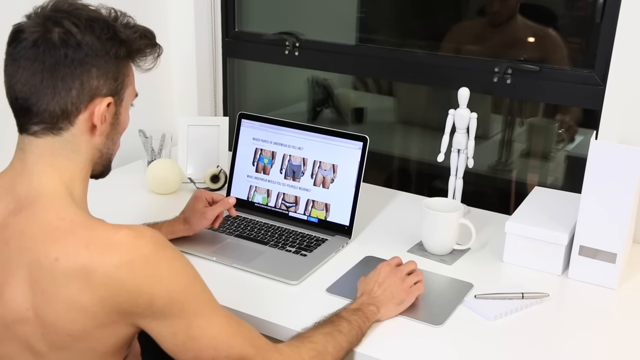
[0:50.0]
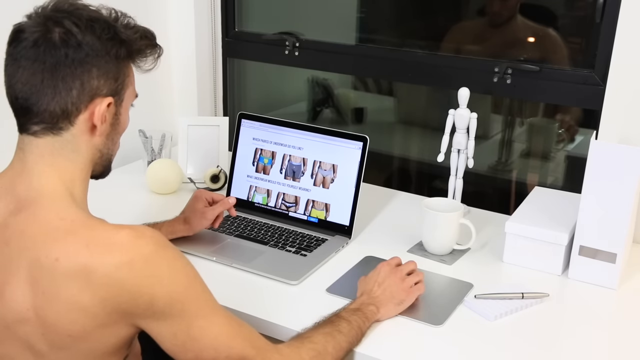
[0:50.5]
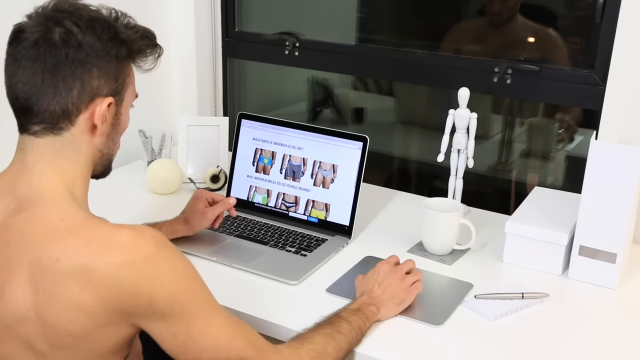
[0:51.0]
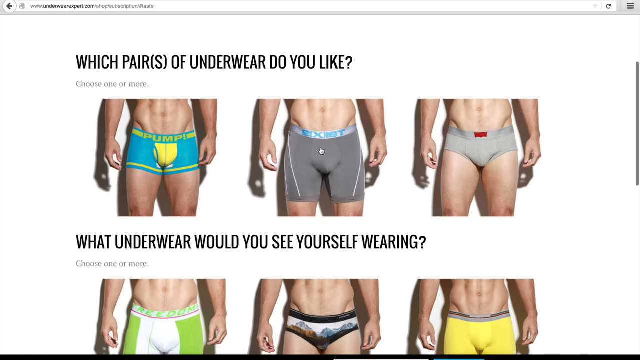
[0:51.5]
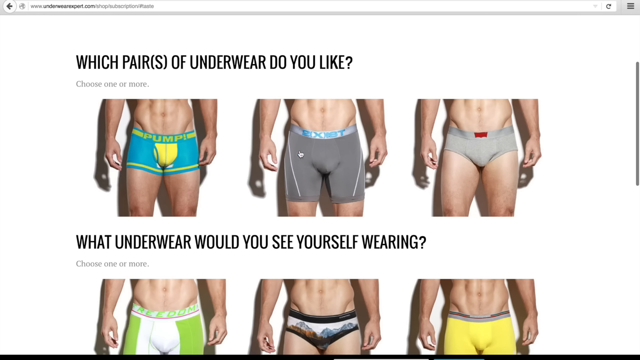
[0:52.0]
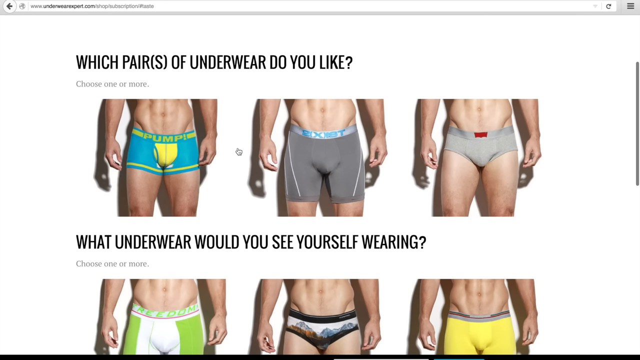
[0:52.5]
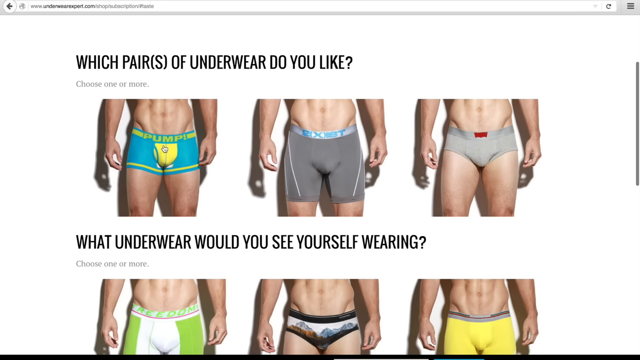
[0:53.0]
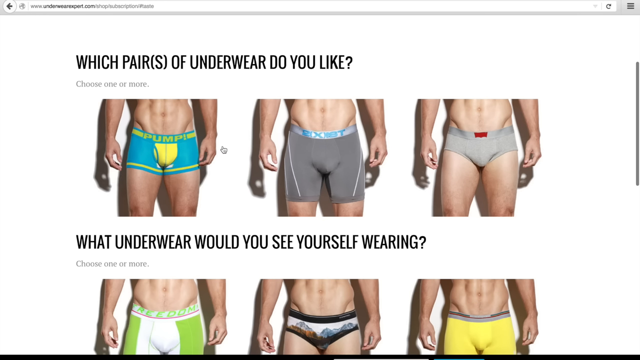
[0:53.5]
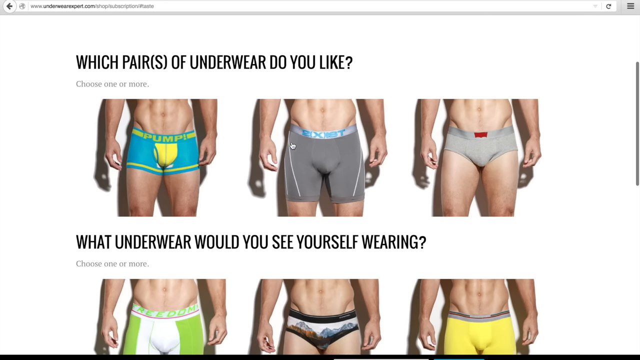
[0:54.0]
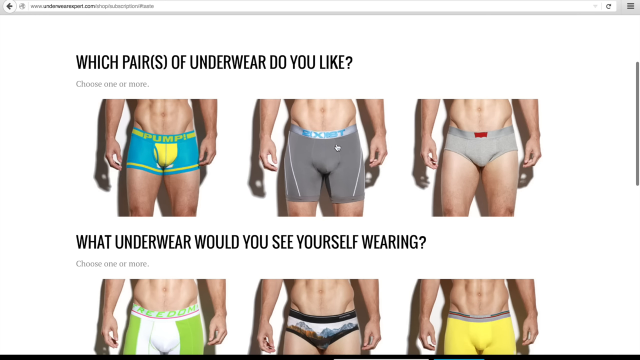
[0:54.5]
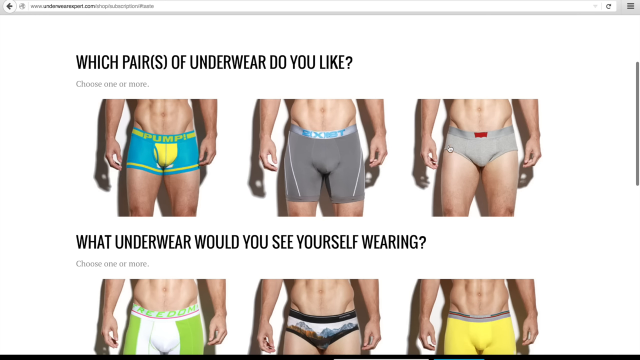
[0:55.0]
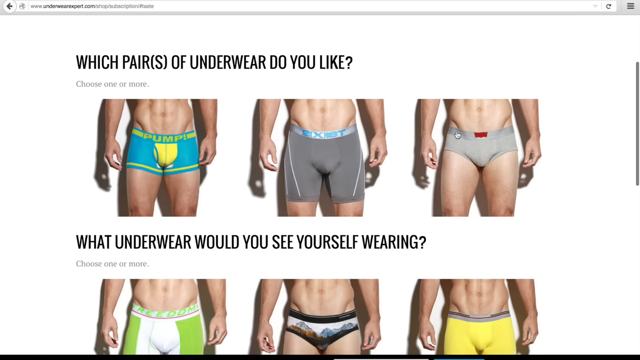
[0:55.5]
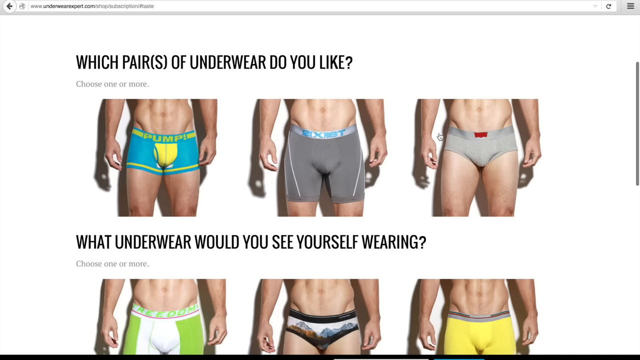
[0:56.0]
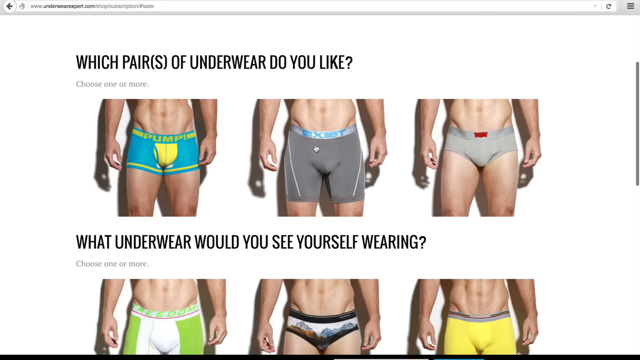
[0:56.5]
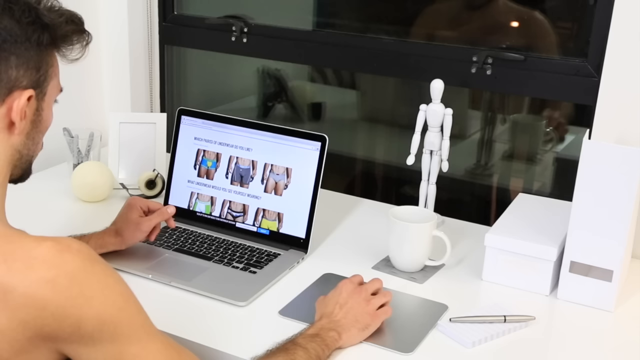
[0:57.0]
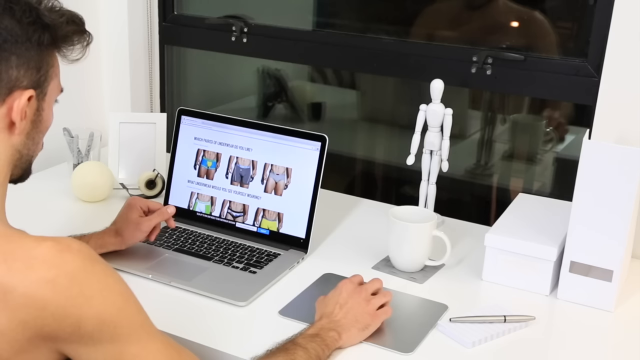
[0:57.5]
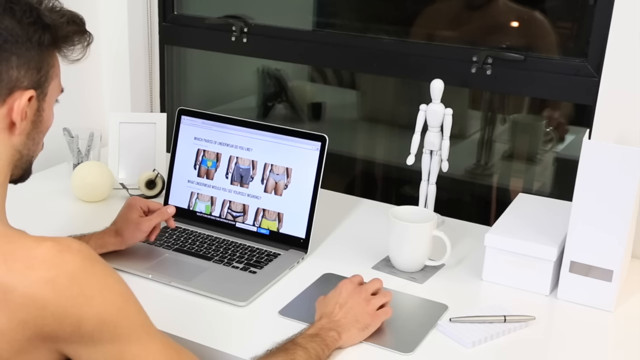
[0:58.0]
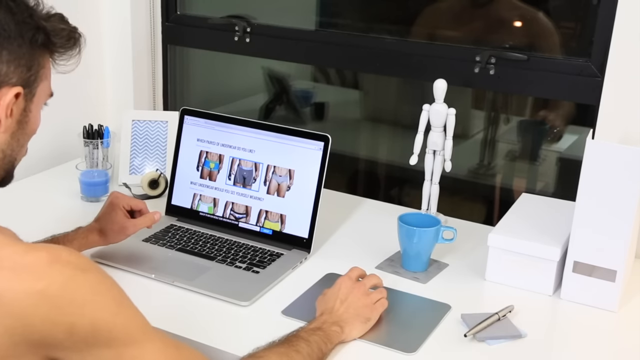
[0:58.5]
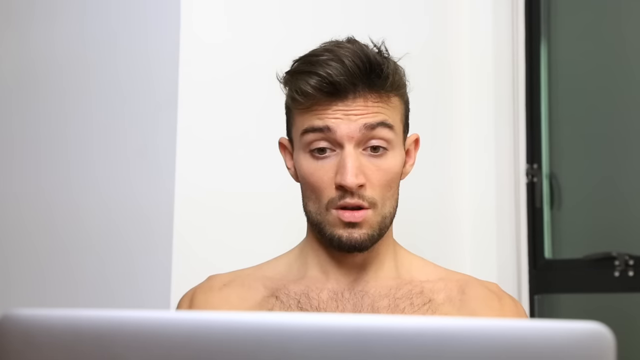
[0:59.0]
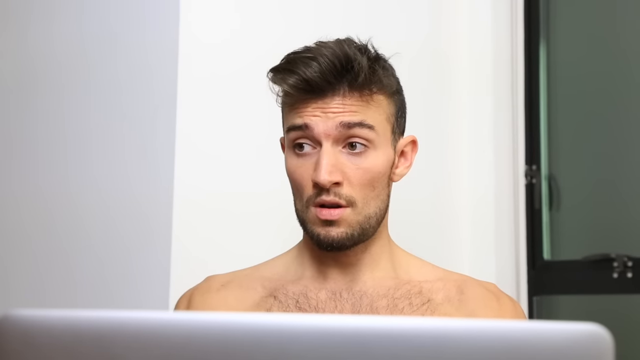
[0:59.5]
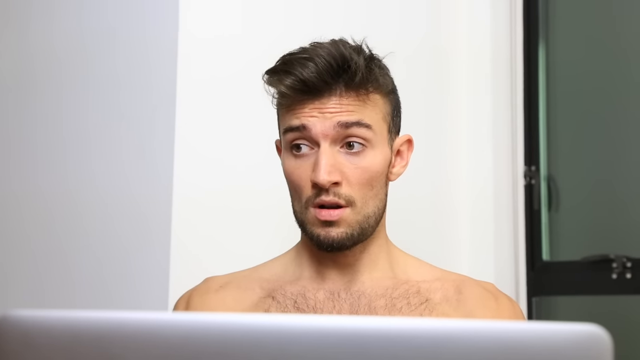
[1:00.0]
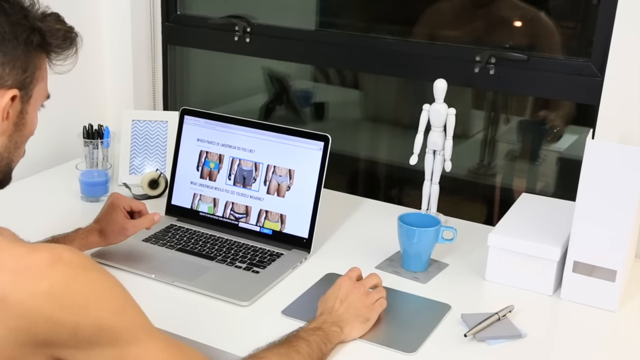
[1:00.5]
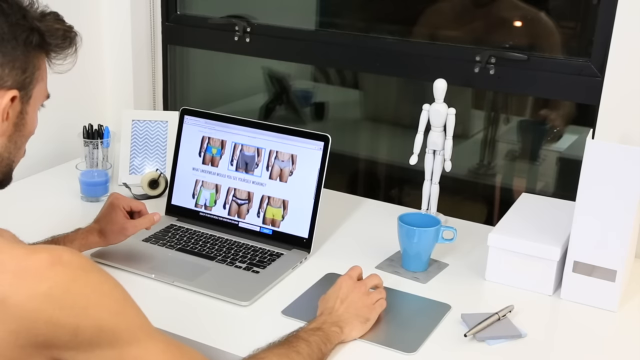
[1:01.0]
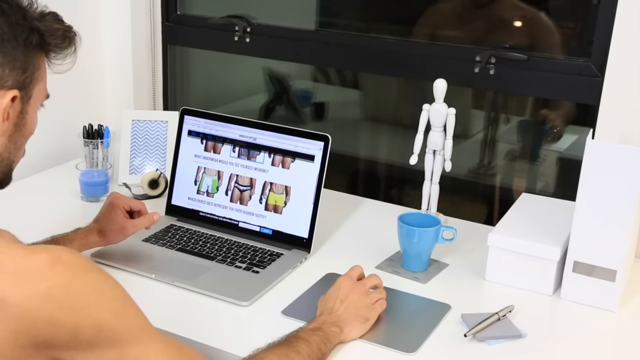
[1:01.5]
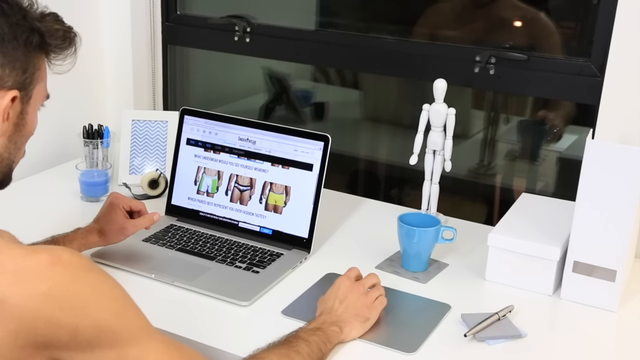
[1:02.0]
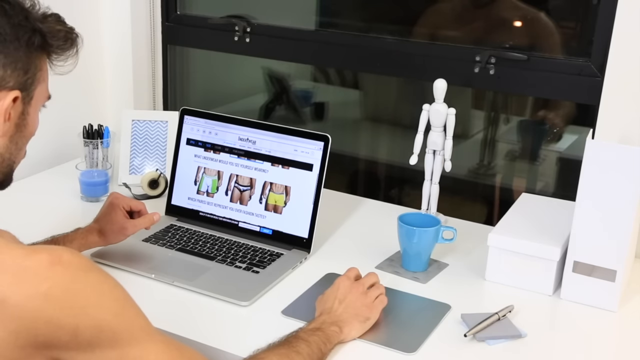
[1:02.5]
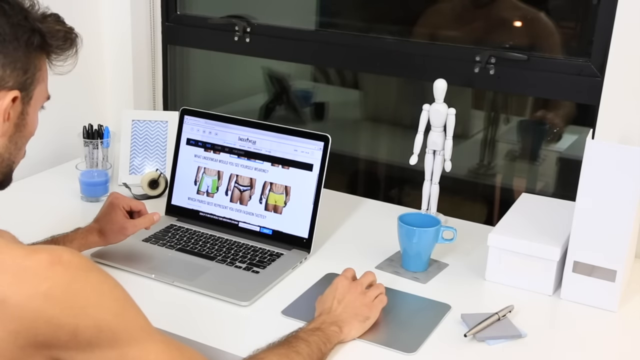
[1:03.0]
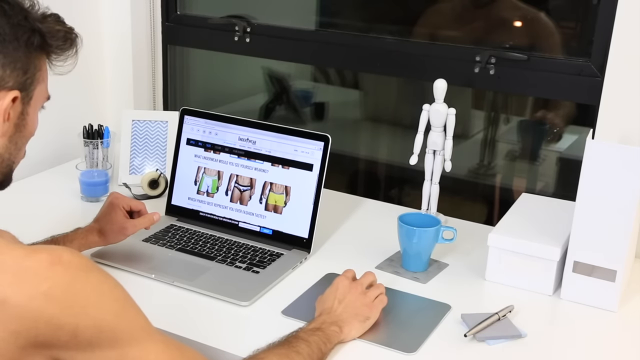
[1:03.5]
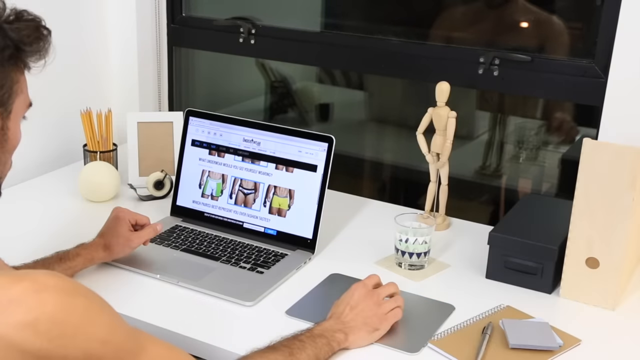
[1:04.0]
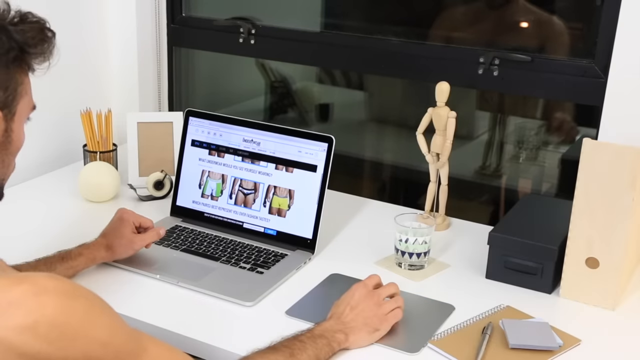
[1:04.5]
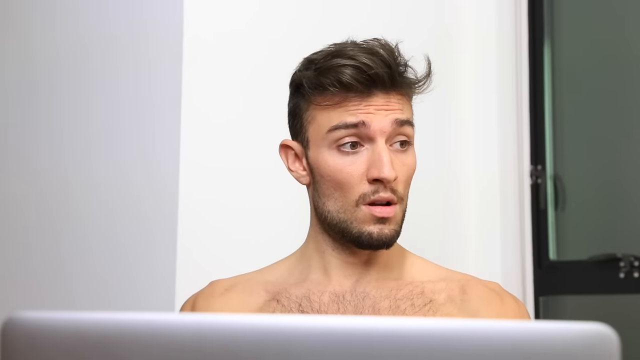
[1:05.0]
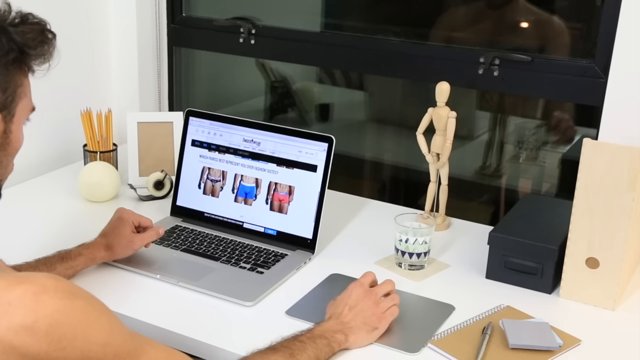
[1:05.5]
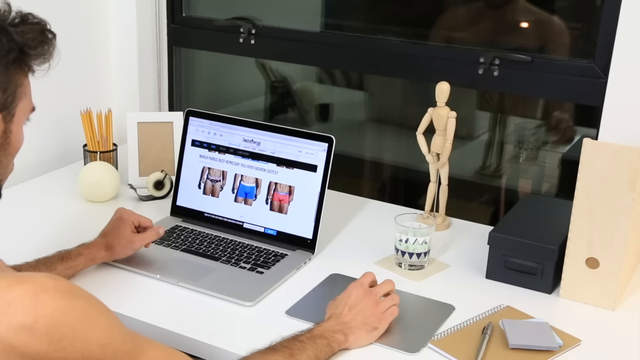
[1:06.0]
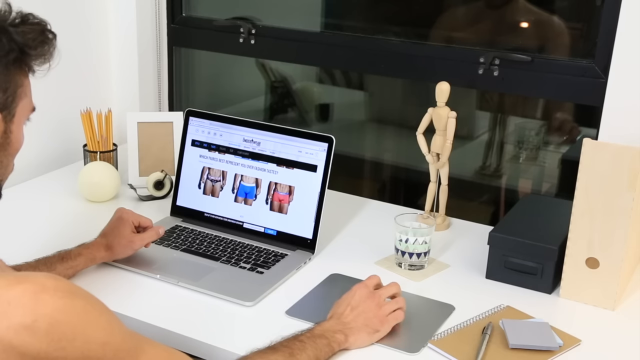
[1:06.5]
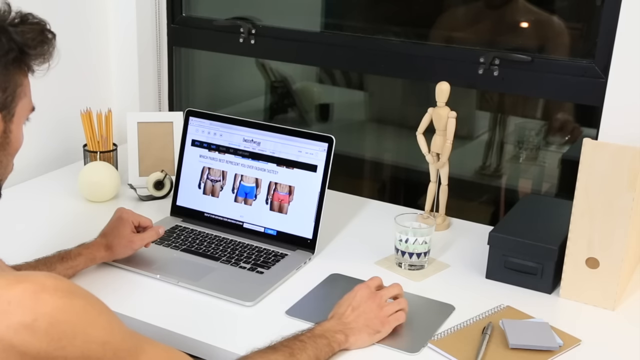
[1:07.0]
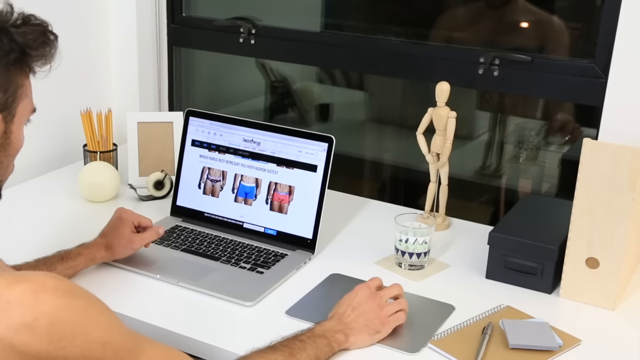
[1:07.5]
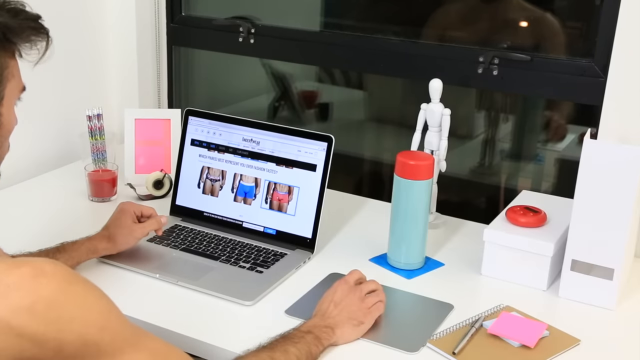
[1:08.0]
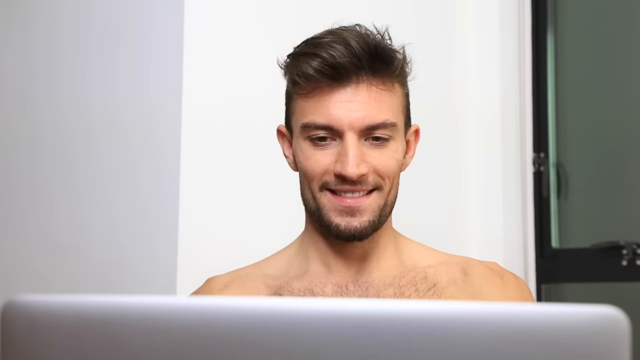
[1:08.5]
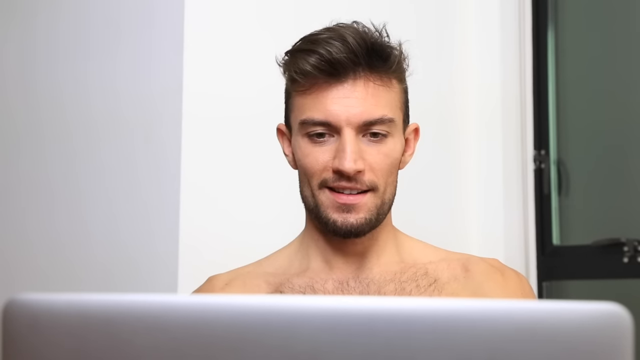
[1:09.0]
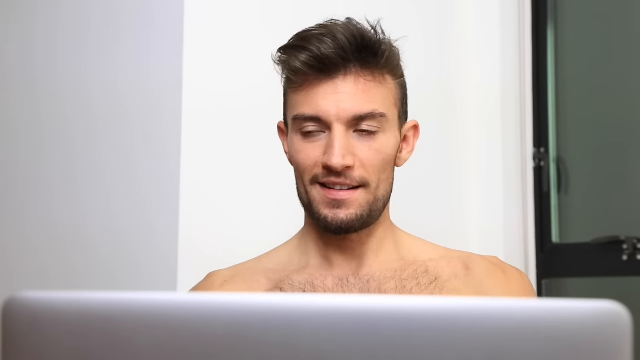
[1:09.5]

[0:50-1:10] The shot begins from behind the man, capturing his back, the laptop screen, and the front part of the room, where there is a glass window. The laptop screen shows six different men in different underwear. The camera focuses on the man's face, then shows him clicking on each of the men in underwear, with the cursor moving as he scrolls down to show three more men below. There is a white portrait in front of him. A headline reads "what underwear will you see yourself wearing", and the cursor moves over the black underwear and the yellow underwear.